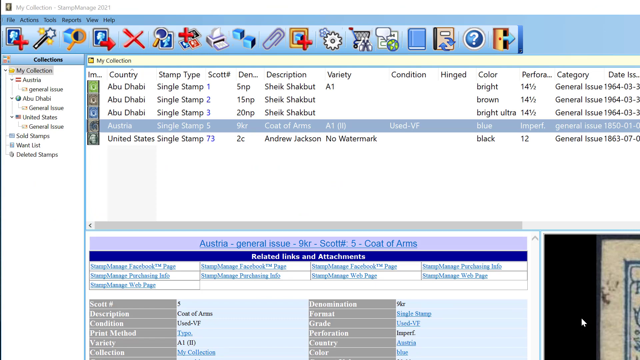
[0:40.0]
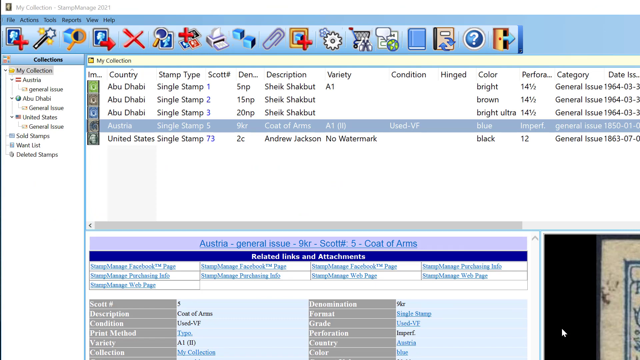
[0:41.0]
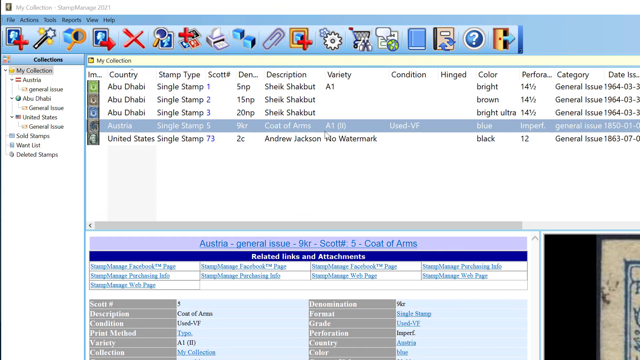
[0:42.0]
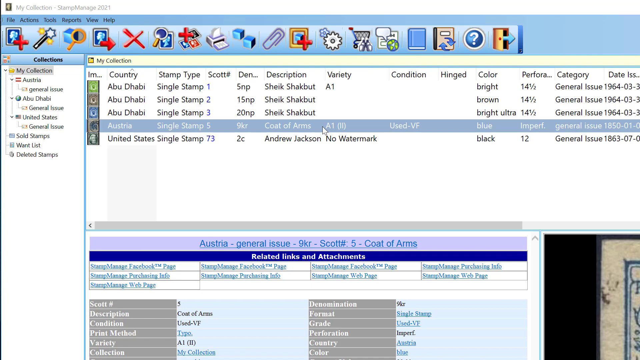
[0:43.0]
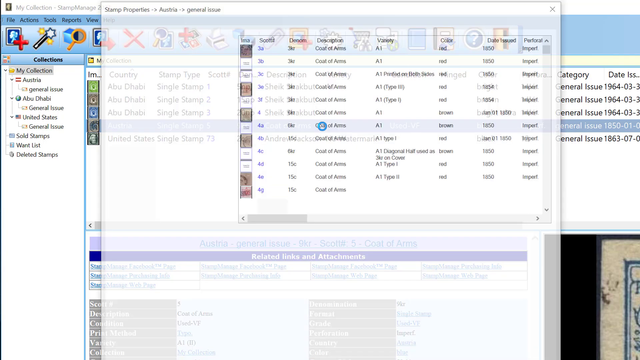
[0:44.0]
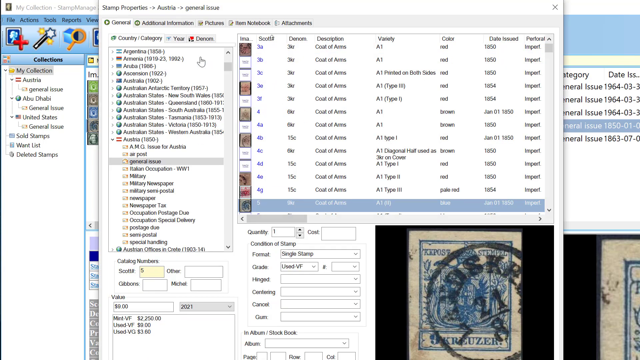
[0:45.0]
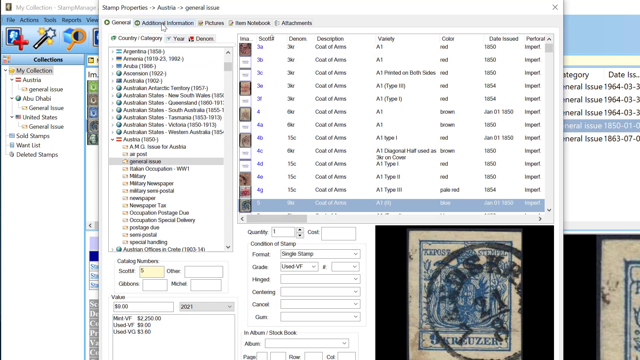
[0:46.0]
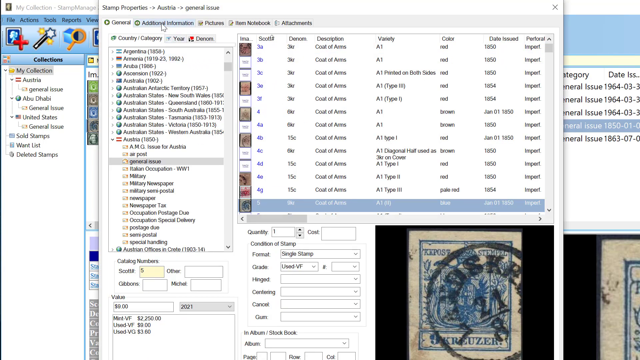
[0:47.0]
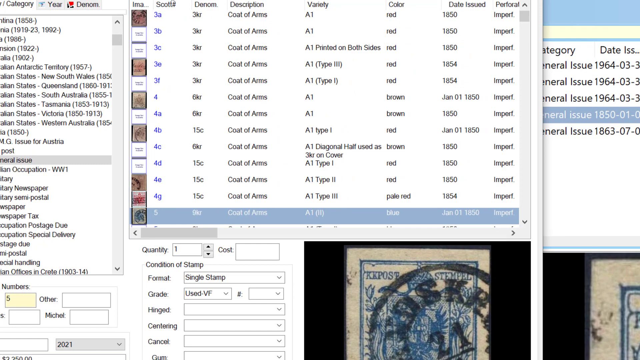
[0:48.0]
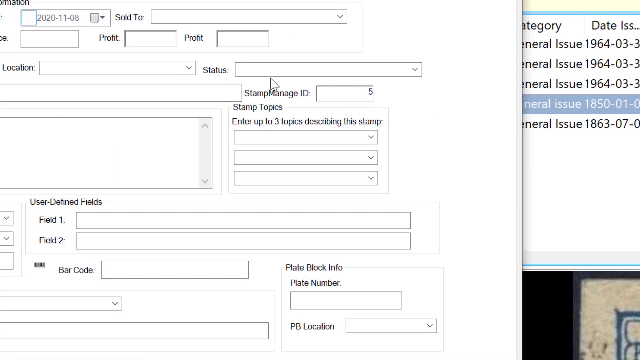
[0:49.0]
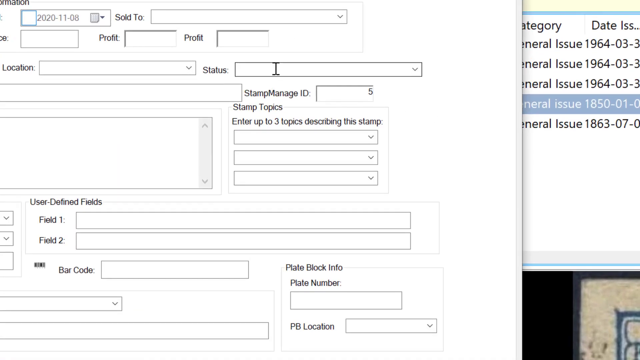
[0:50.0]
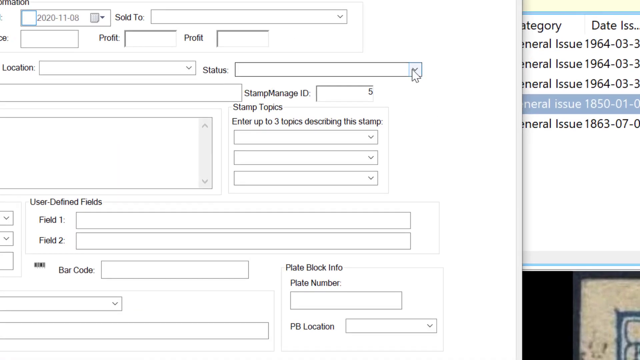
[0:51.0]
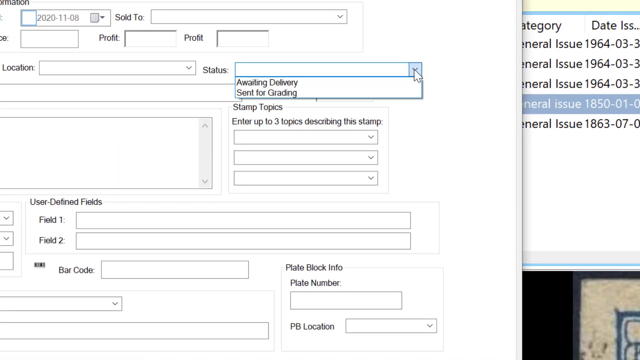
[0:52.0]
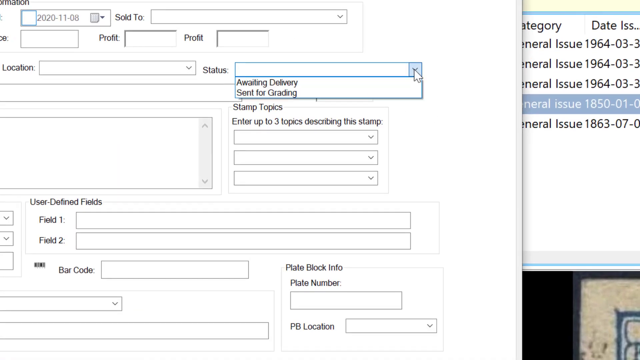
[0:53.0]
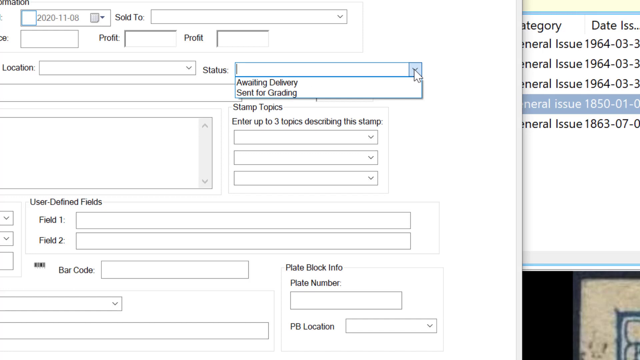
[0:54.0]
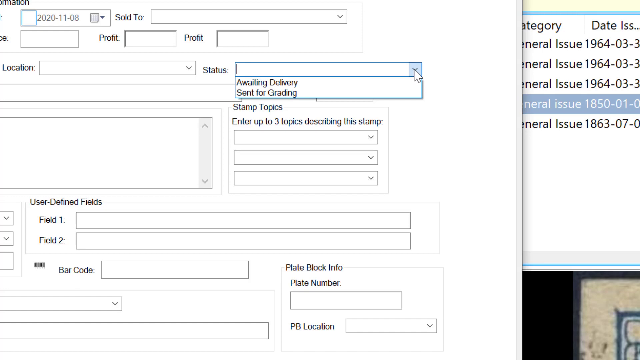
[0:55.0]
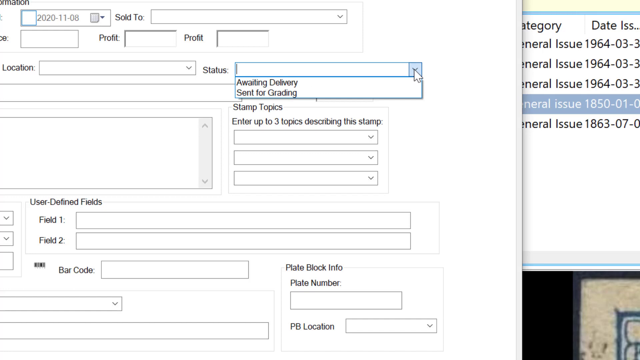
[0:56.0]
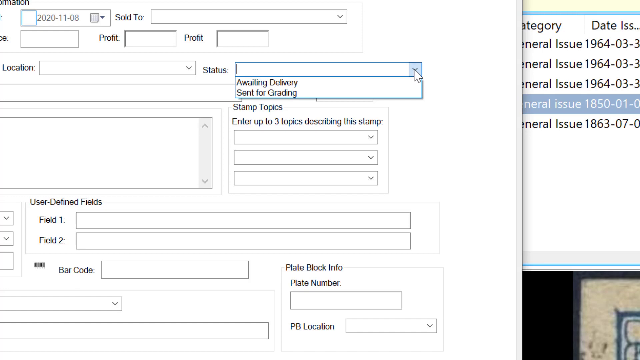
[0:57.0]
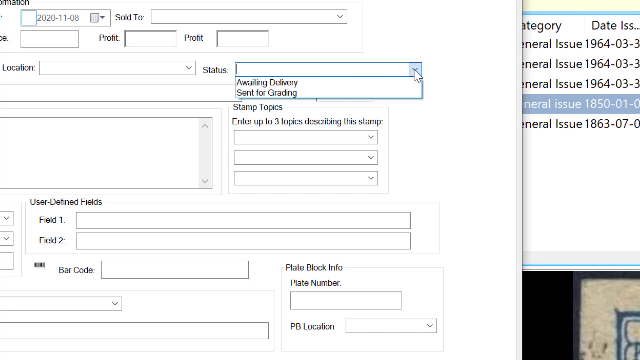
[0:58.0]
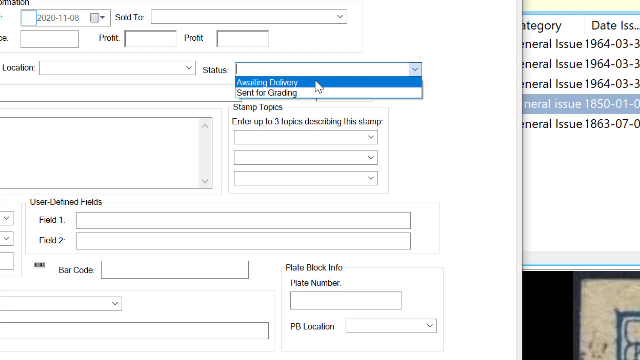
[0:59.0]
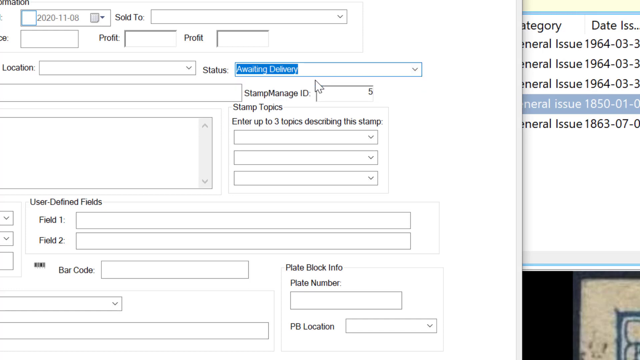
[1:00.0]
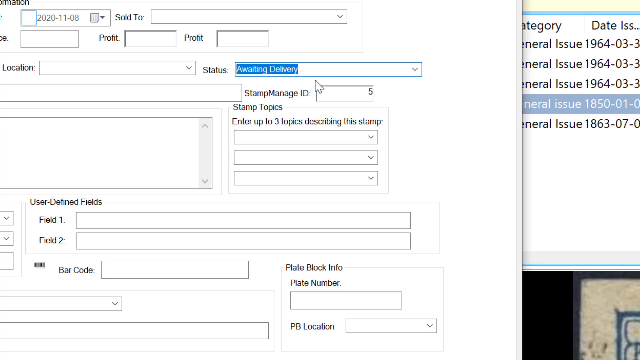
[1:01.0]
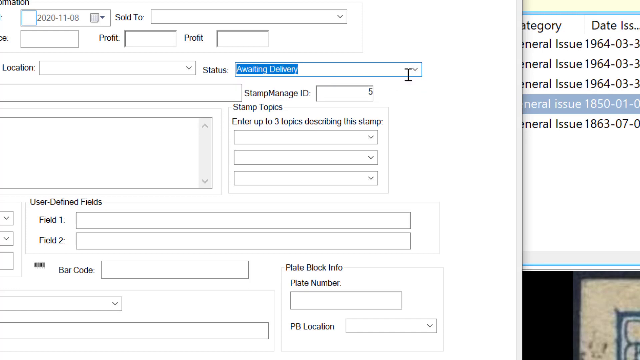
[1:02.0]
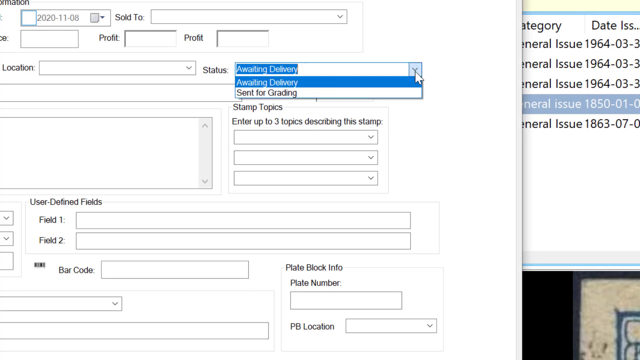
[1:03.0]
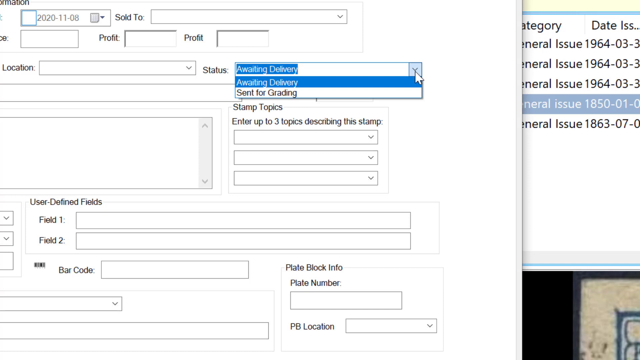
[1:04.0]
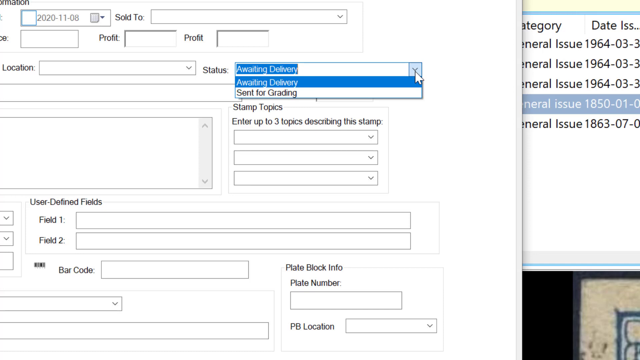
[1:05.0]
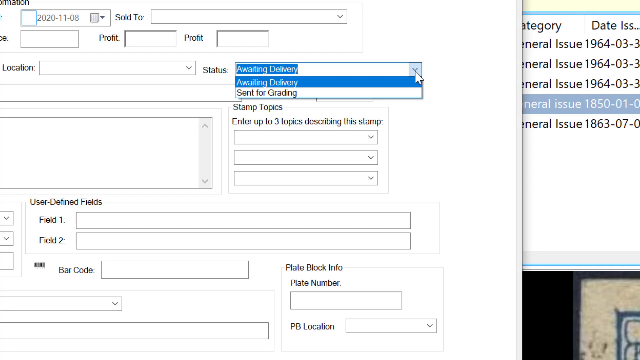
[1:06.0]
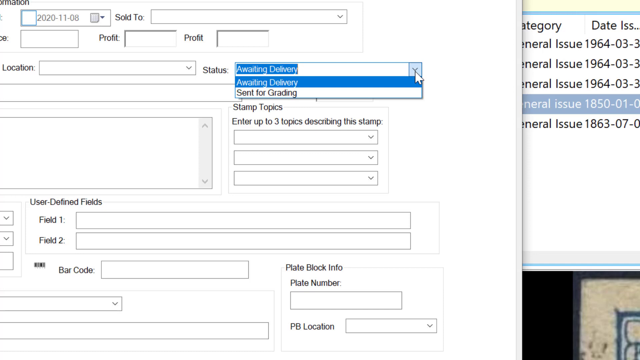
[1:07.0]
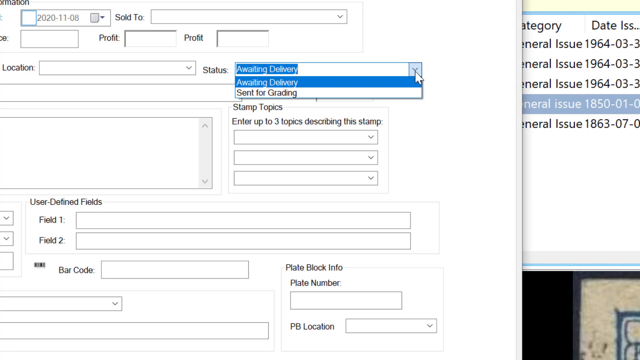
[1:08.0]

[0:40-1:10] The computer program is open, with the blue bar at the top holding icons such as a large X, a printer and a paperclip. On the left, below the icons, a blue bar reads "Collections", followed by various links that have sub-links beneath them. A folder called "My Collection" is open and shown on the right side, with five rows of different stamps. Each stamp has a small icon or image on the left, and on the right a country column lists, from the top, "Abu Dhabi", "Abu Dhabi", "Abu Dhabi", "Austria" and "United States". The person clicks the fourth row, the stamp from Austria, which opens a new window. The screen recording zooms in on a text box labeled "Status" with a drop-down menu containing two options: "Awaiting Delivery" and "Sent for Grading". The person clicks "Awaiting Delivery", which is entered into the drop-down menu, and then clicks the drop-down arrow again.